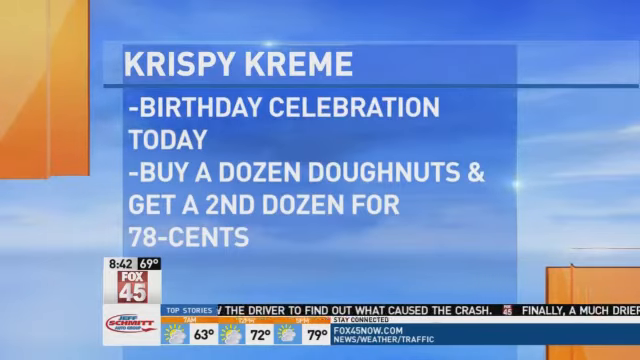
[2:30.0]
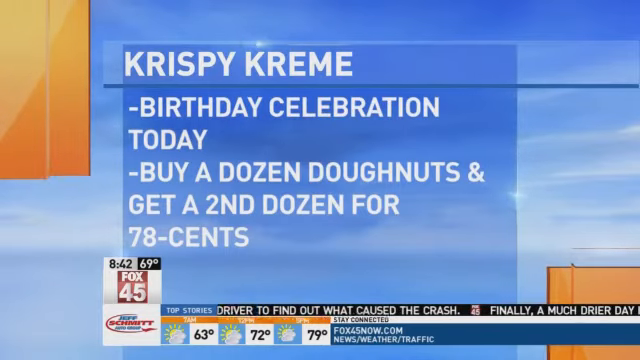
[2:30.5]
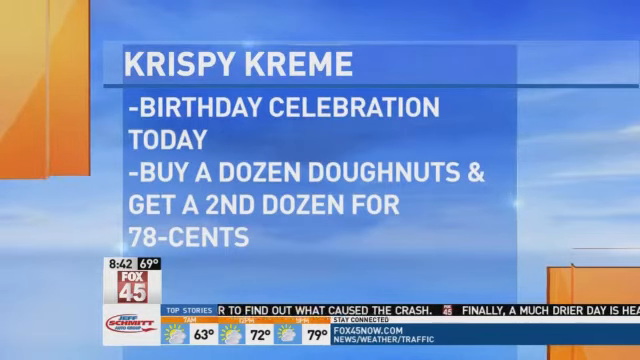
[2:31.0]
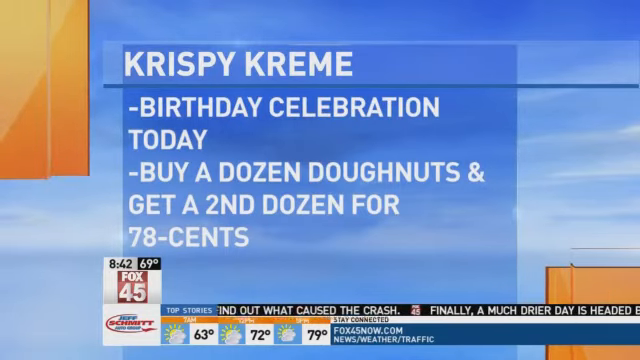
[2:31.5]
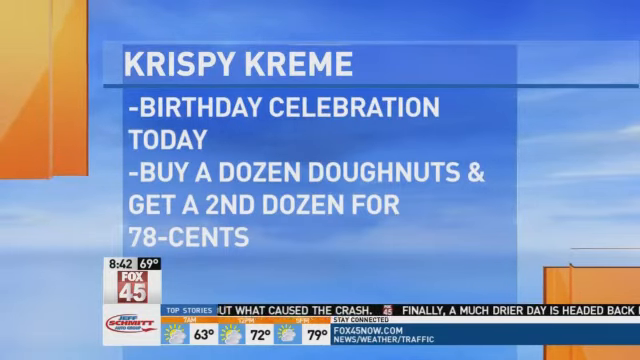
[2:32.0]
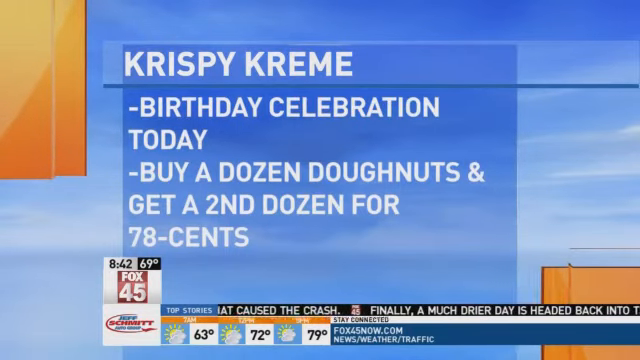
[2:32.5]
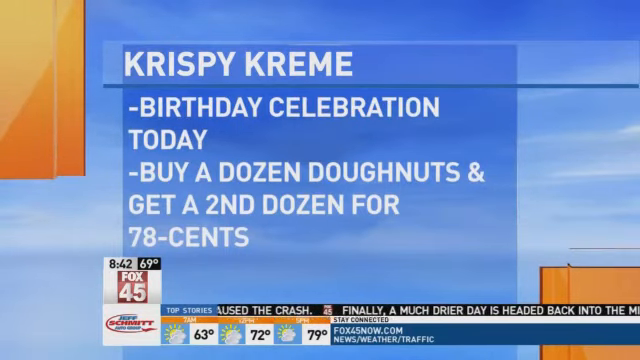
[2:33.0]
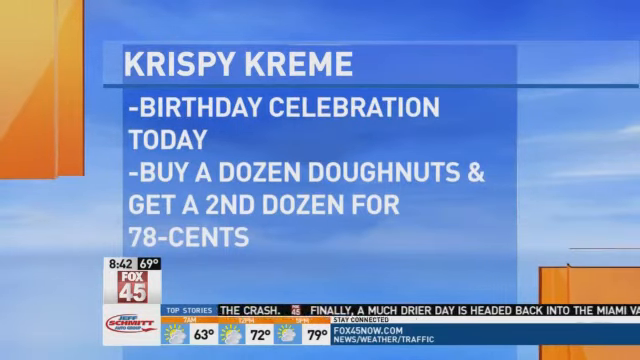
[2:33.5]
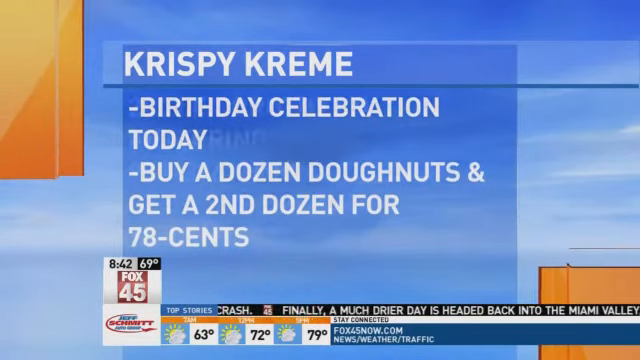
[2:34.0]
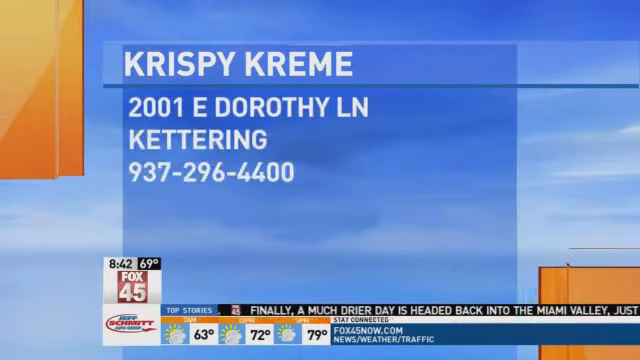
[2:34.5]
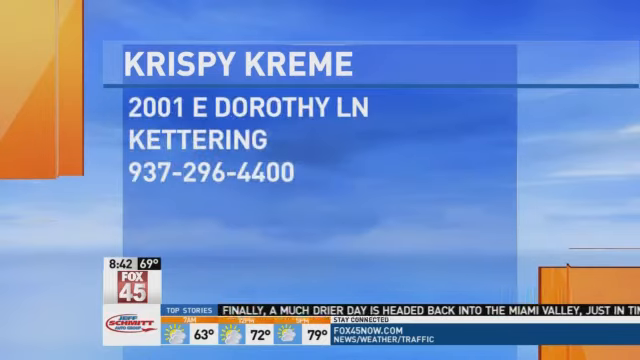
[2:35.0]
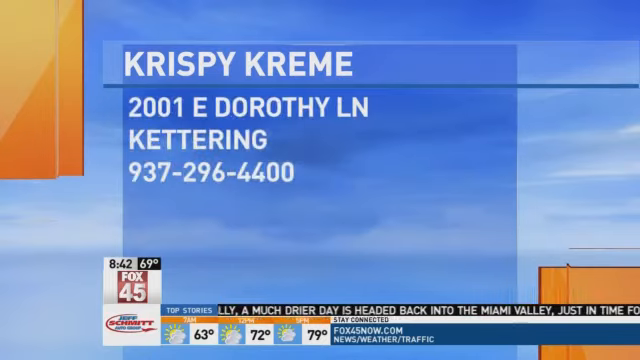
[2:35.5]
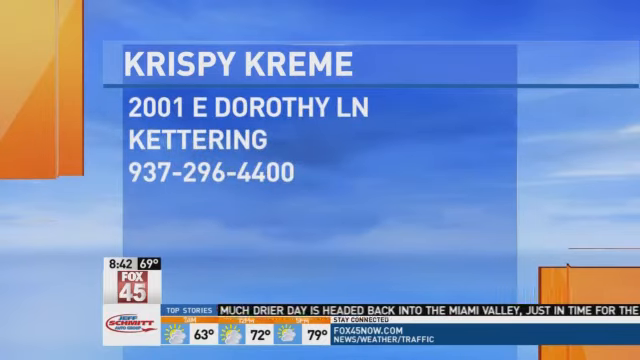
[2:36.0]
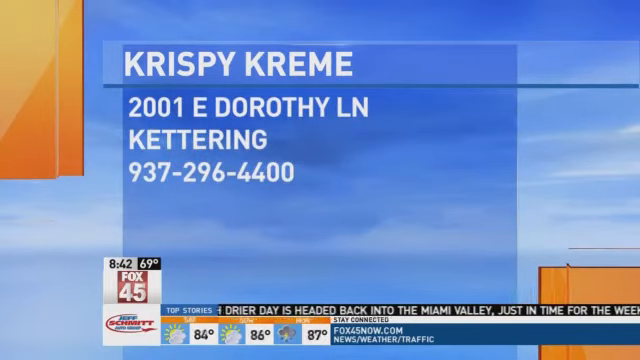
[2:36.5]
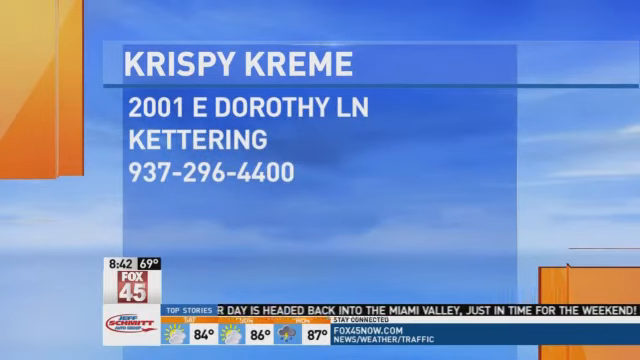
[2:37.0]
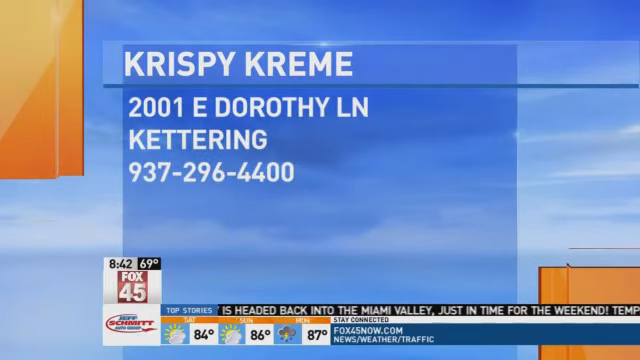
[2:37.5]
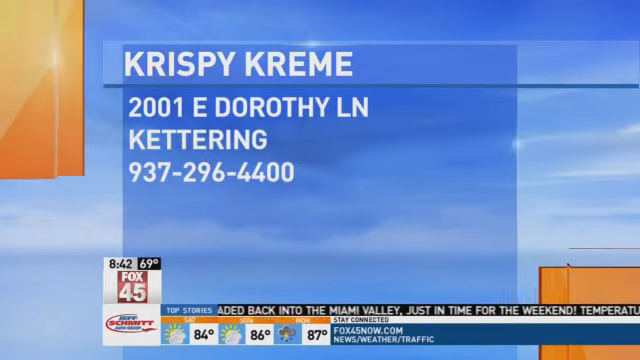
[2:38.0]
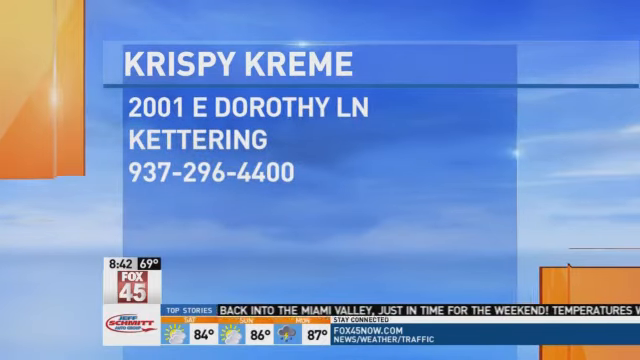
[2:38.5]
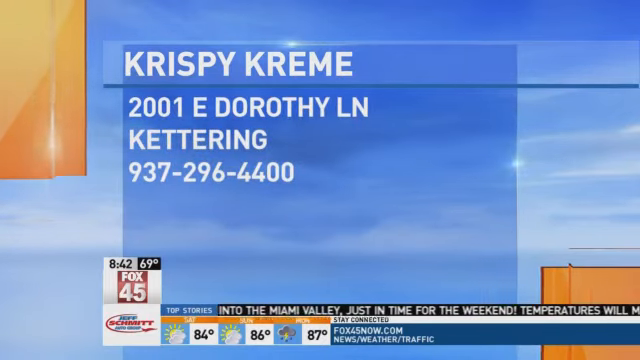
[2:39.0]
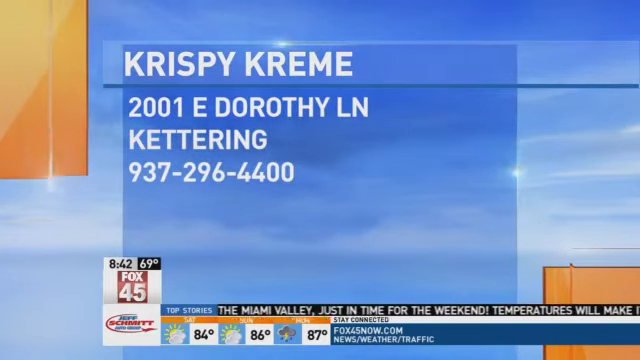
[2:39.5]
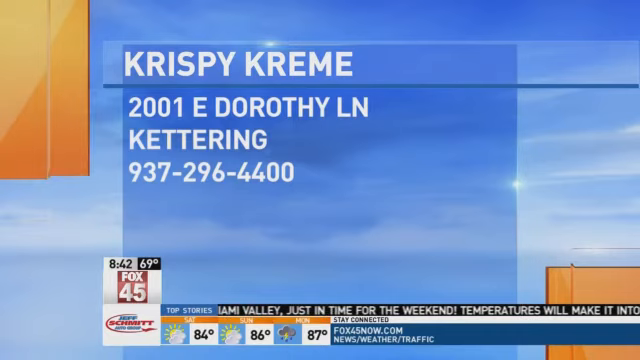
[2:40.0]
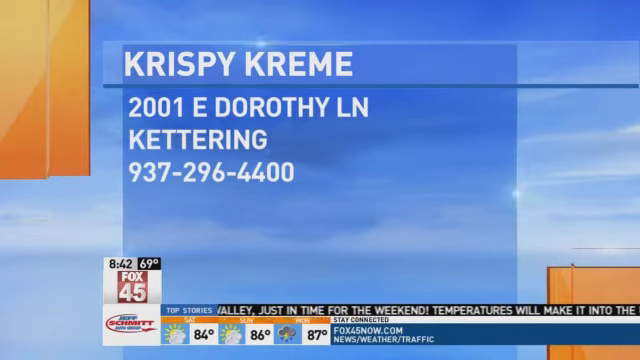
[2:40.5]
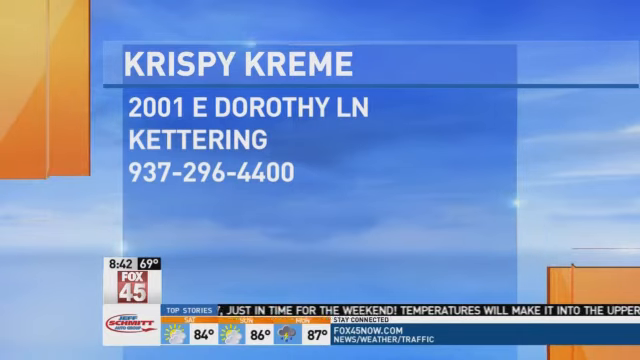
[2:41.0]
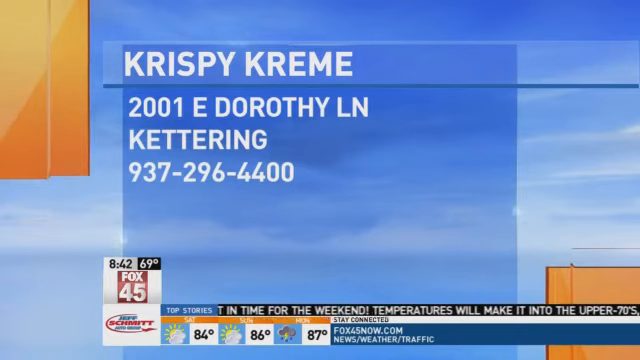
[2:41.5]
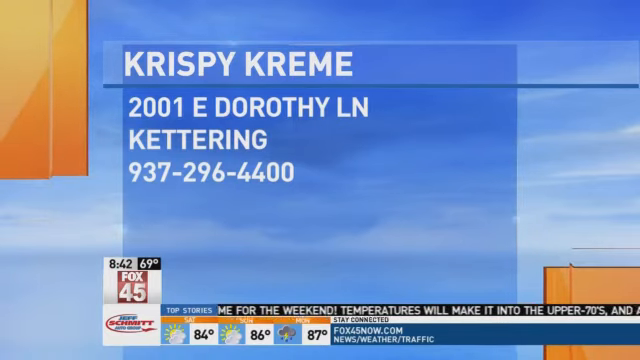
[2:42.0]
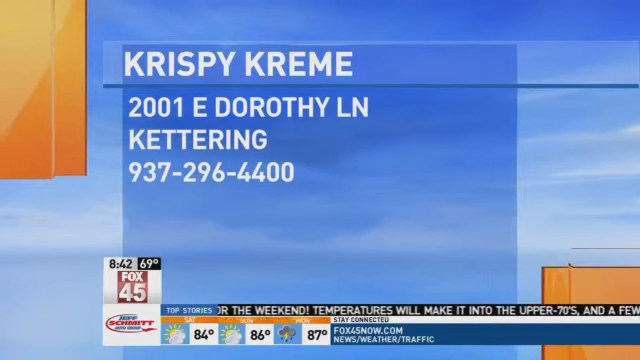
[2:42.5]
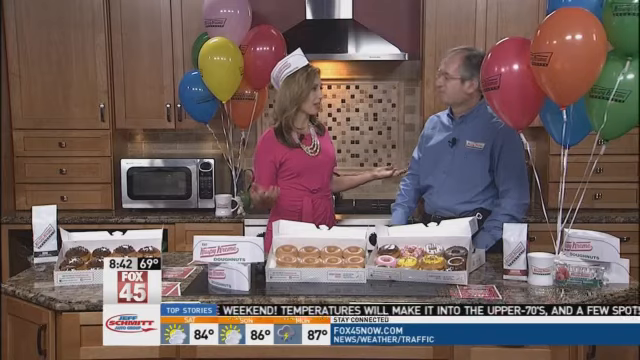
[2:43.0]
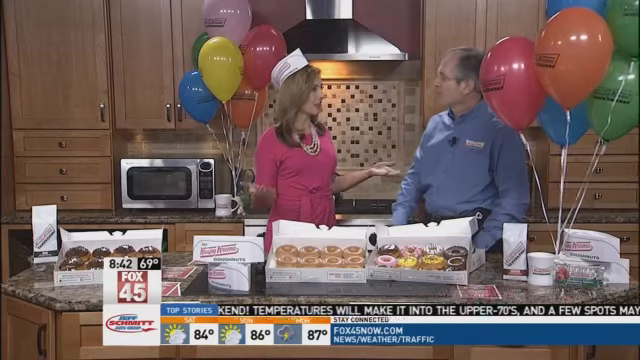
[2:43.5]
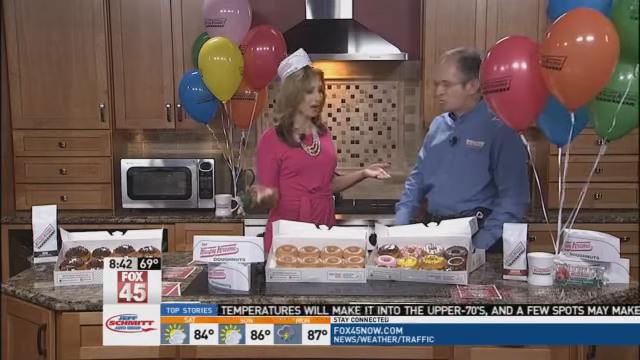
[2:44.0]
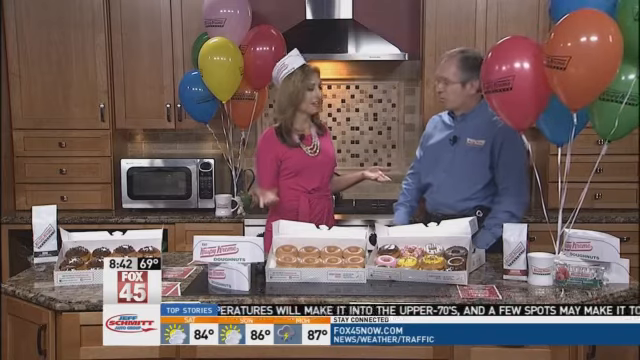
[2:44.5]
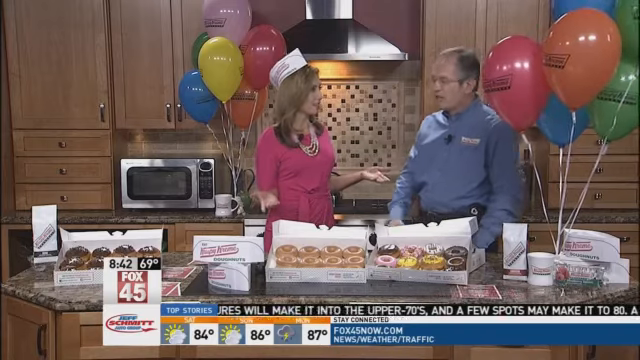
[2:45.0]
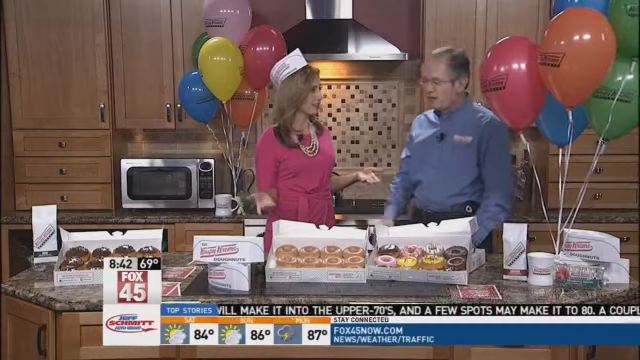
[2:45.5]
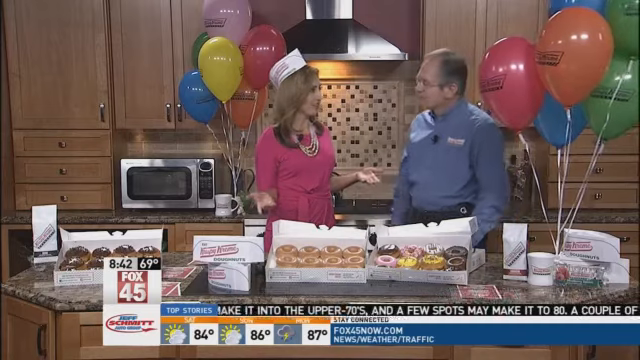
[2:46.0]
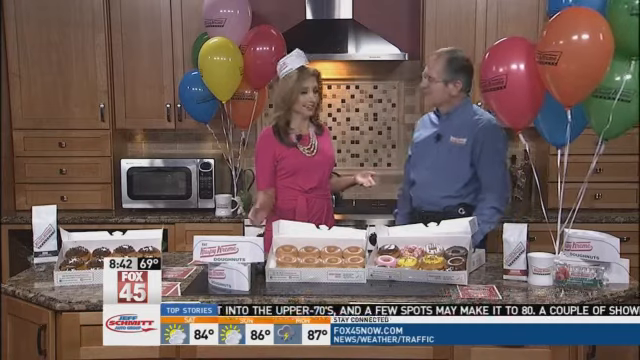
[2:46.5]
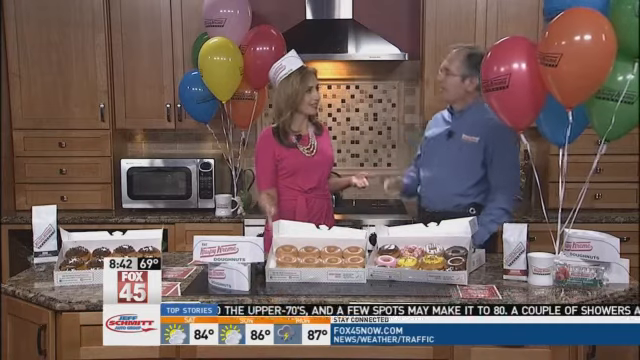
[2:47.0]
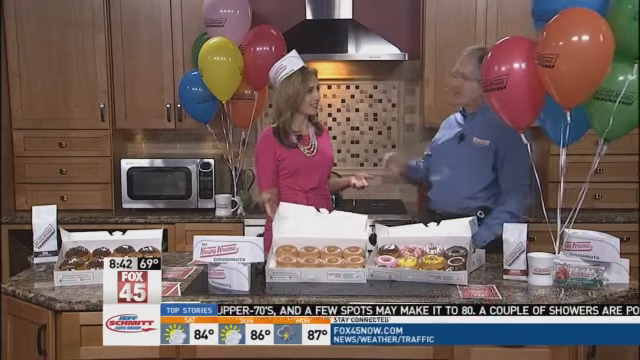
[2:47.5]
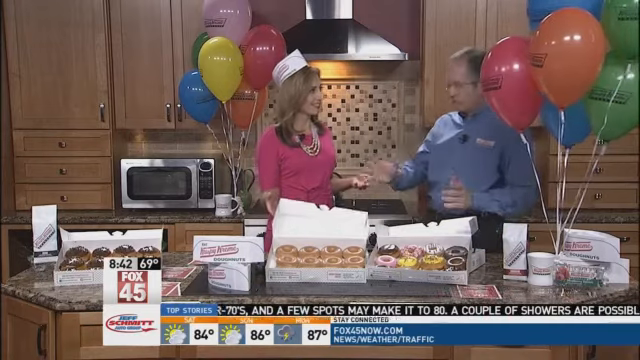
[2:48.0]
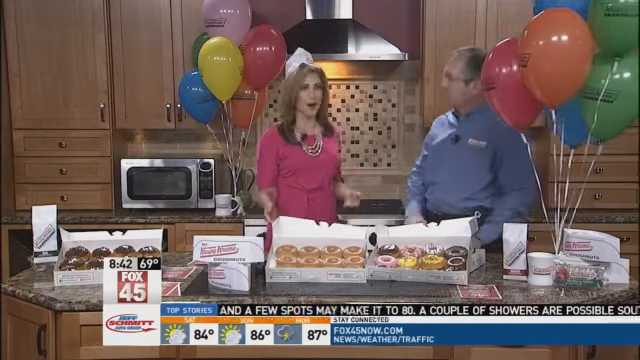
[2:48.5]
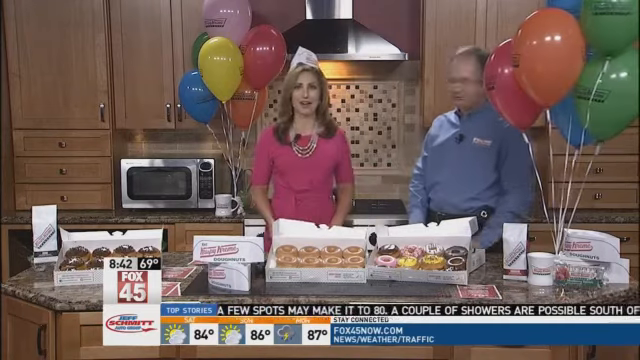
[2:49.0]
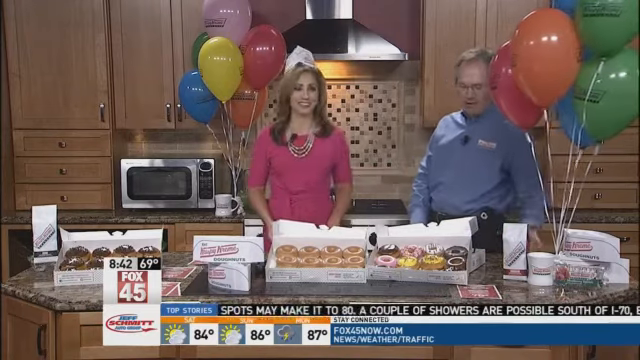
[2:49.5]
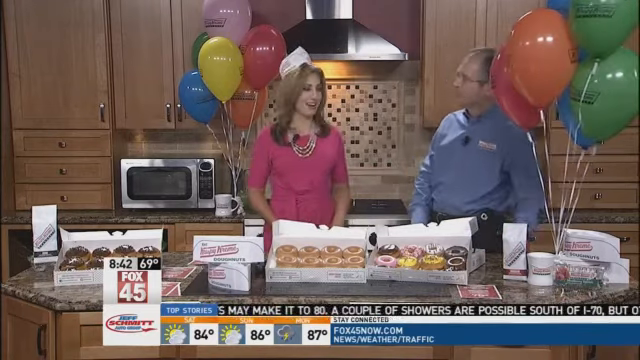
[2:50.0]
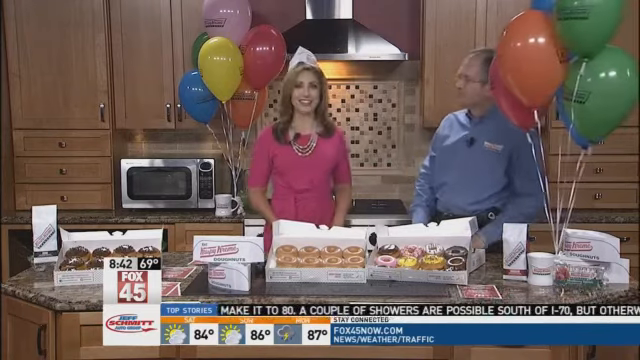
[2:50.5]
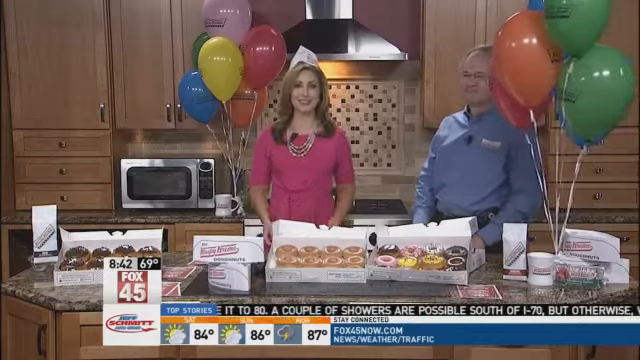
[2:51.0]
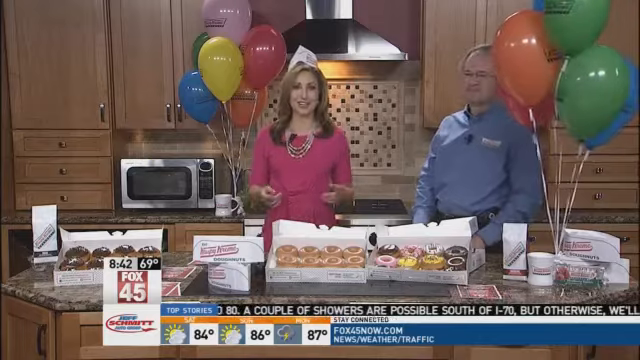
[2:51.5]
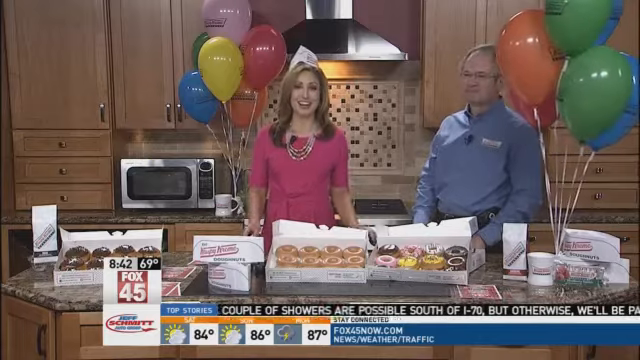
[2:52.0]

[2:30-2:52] The text panel about the Krispy Kreme birthday celebration, offering a second dozen donuts for 78 cents with the purchase of a dozen, is shown. The screen also shows that this is the Fox News channel, reading "Fox 45", along with the time 8:42 and 69 degrees. A chyron scrolls along the bottom reading "the weekend temperatures will make it into the upper 80s". The shot then returns to the reporter and the representative. She holds a hand palm up as they talk, then lifts one of the box lids a little to draw attention to the donuts. She smiles and really looks like she is giving her closing words, trying to wrap everything up. The representative kind of steps back a little, away from her and the donuts.